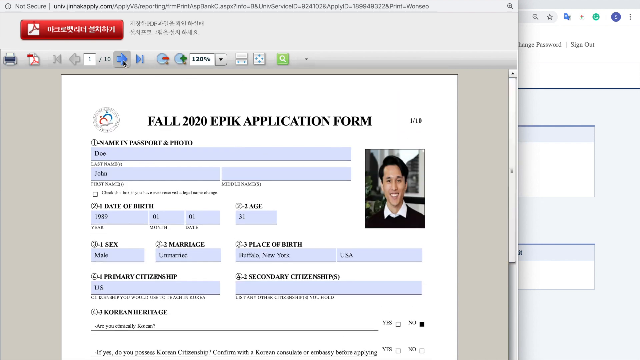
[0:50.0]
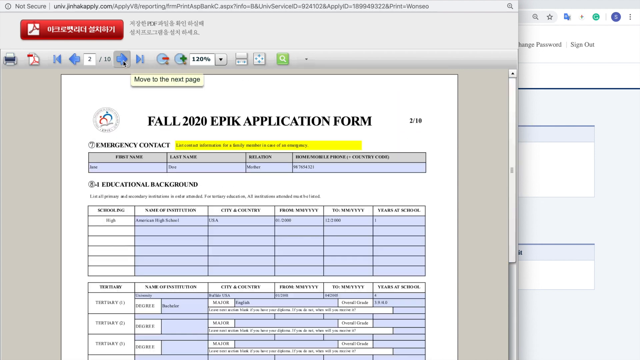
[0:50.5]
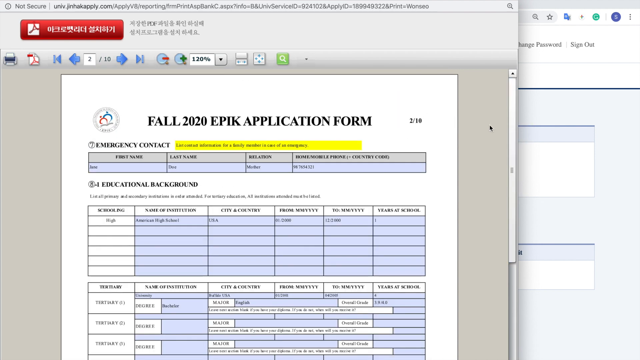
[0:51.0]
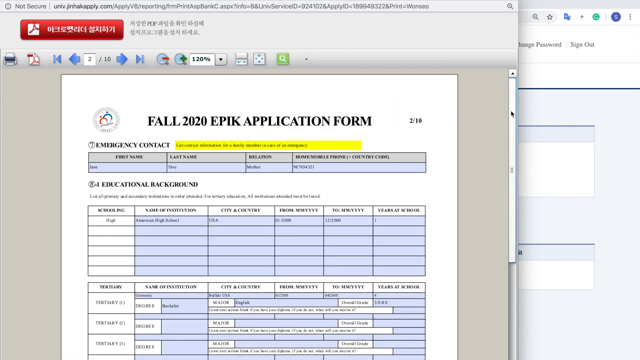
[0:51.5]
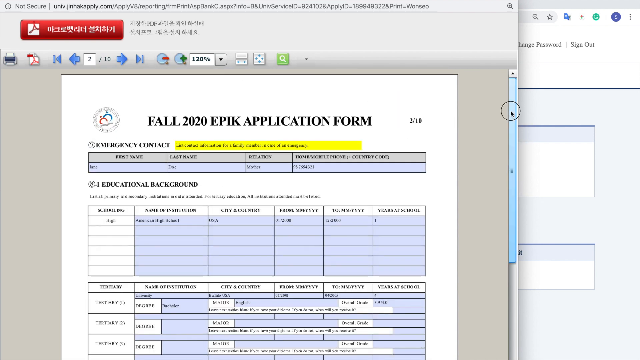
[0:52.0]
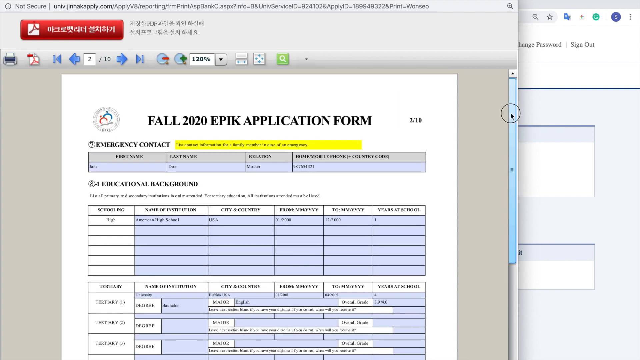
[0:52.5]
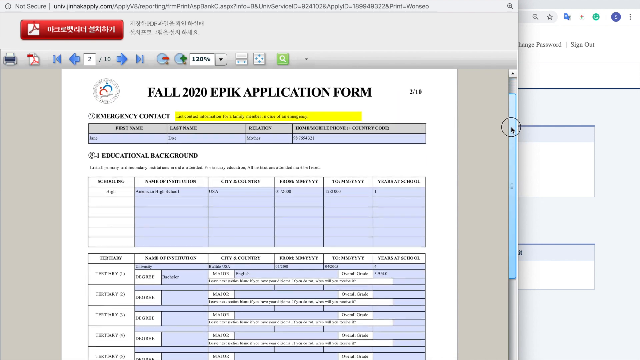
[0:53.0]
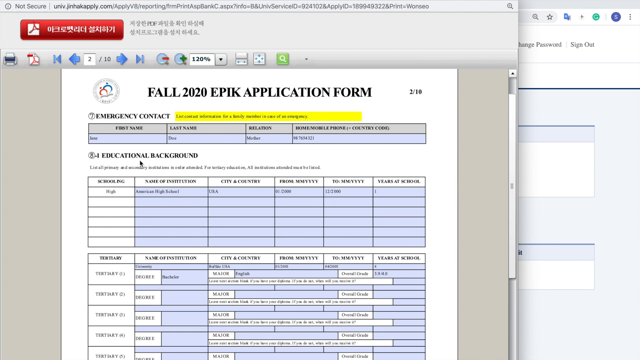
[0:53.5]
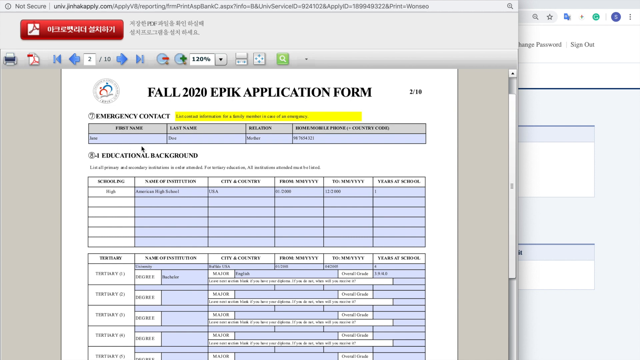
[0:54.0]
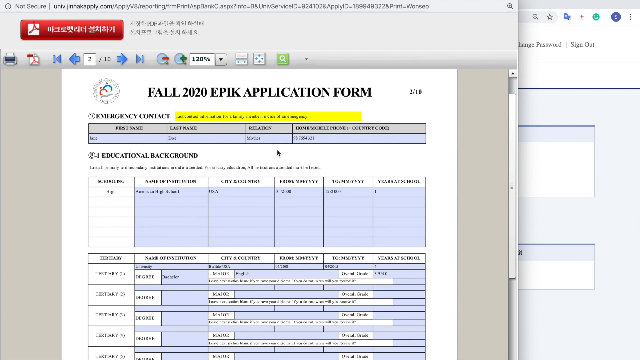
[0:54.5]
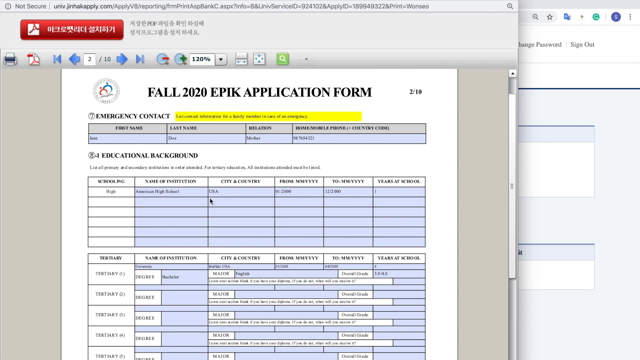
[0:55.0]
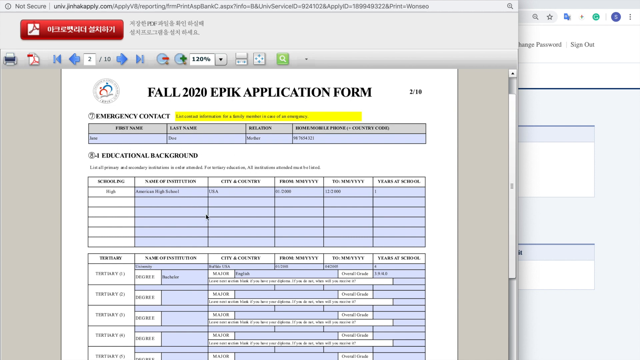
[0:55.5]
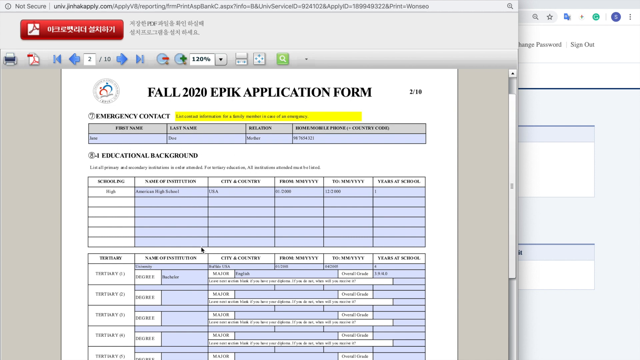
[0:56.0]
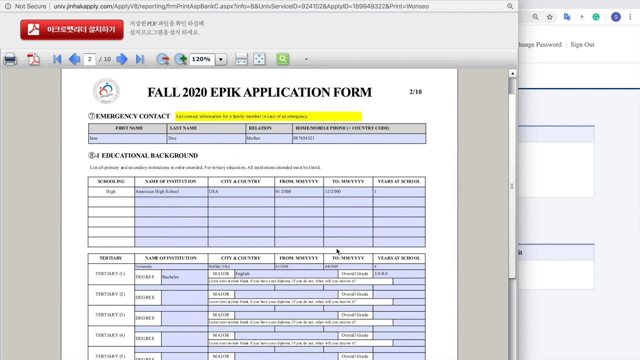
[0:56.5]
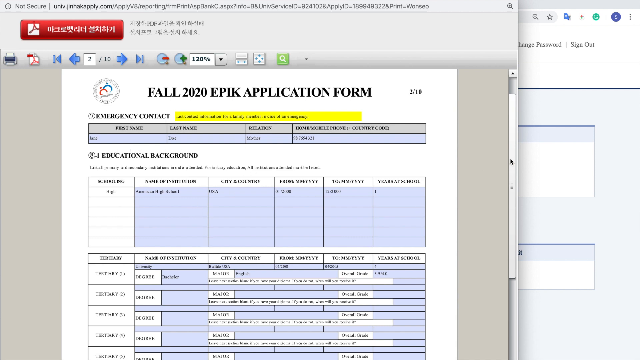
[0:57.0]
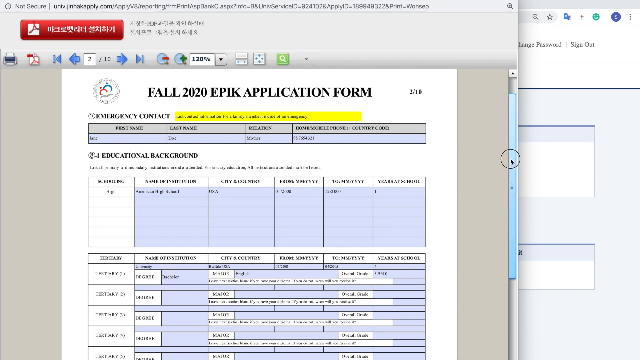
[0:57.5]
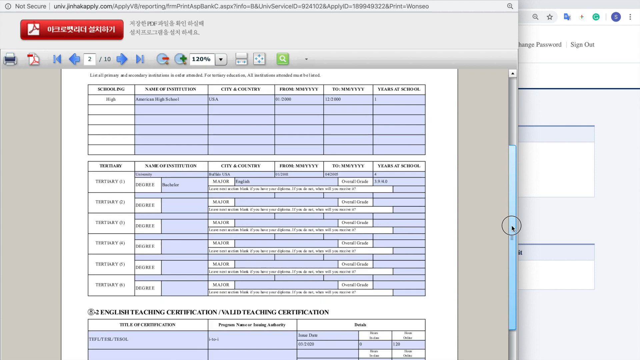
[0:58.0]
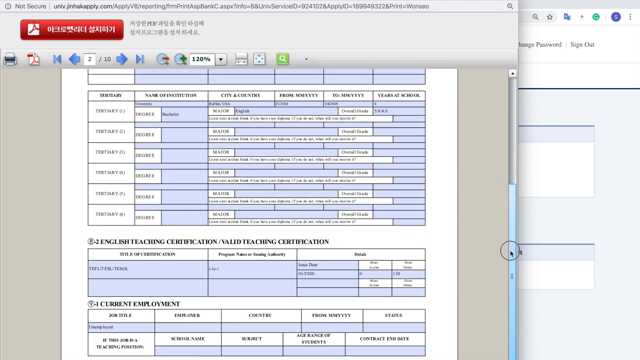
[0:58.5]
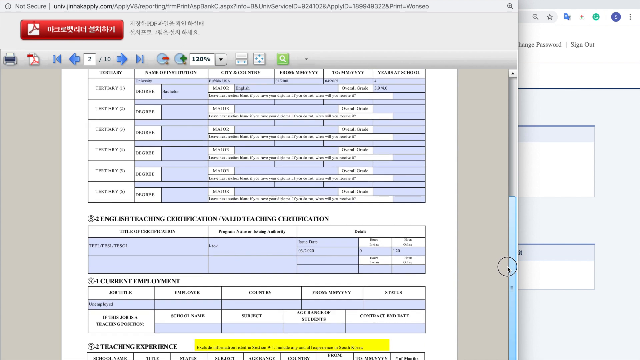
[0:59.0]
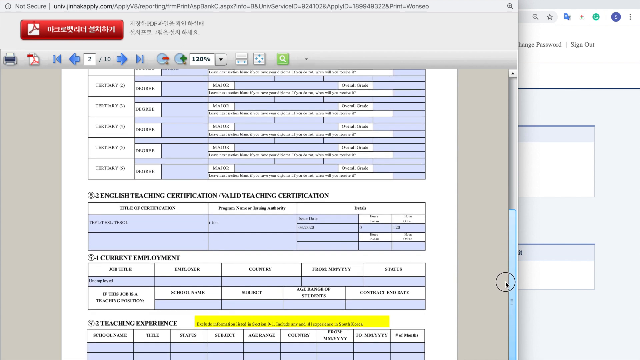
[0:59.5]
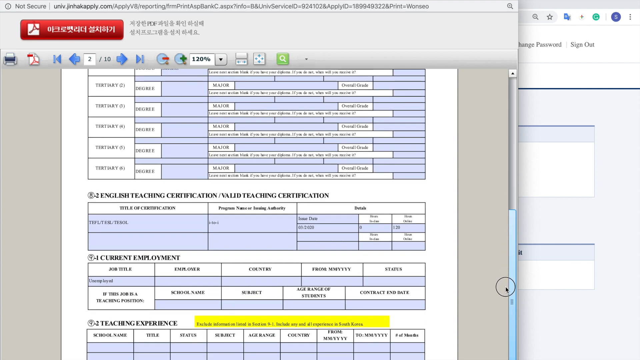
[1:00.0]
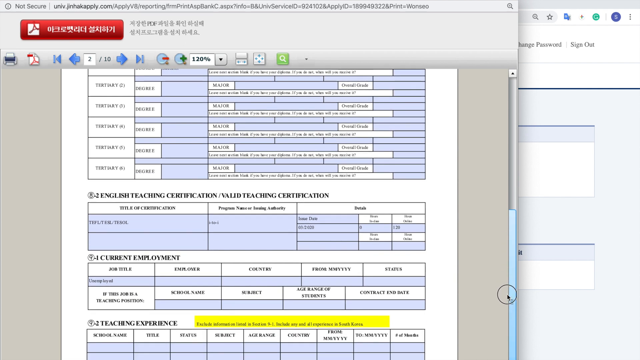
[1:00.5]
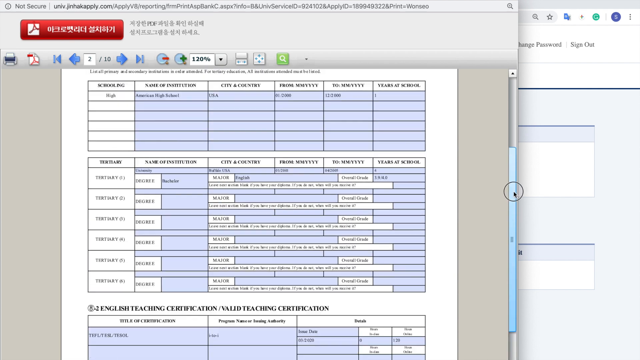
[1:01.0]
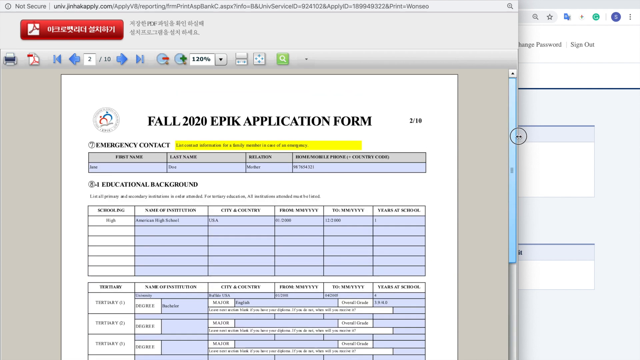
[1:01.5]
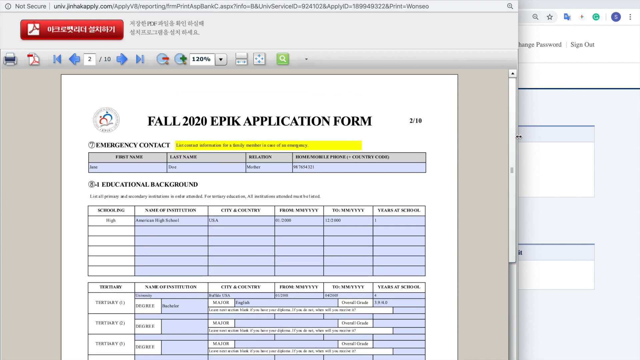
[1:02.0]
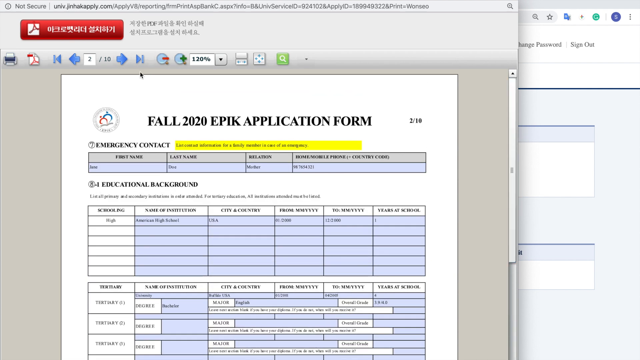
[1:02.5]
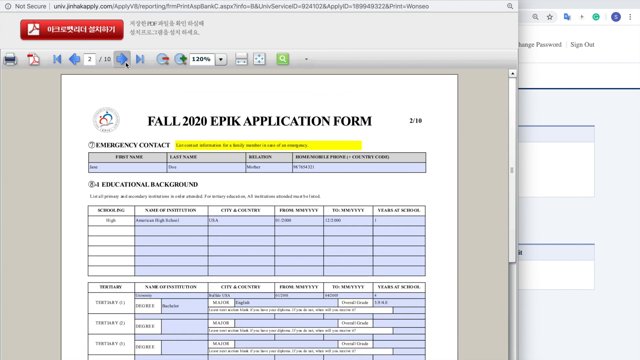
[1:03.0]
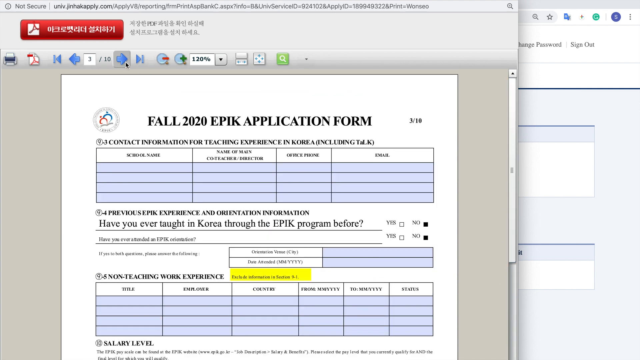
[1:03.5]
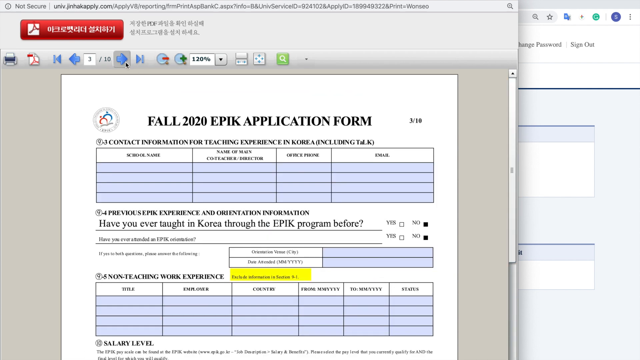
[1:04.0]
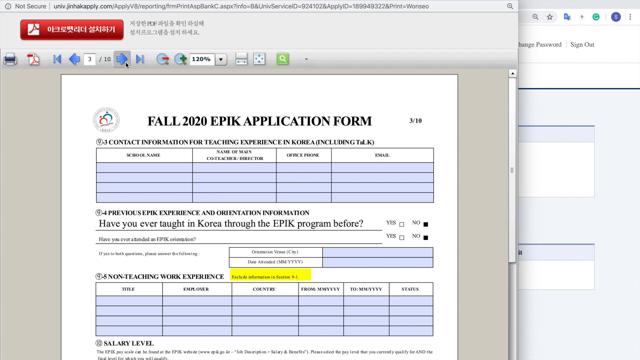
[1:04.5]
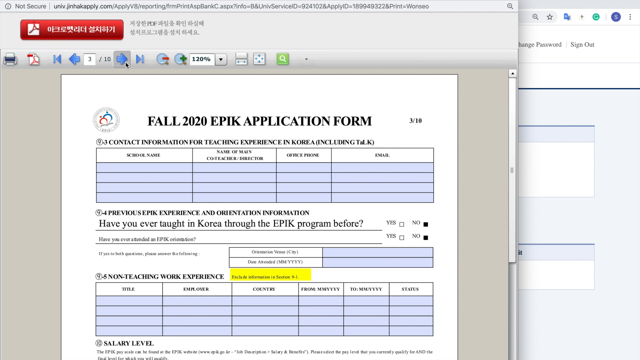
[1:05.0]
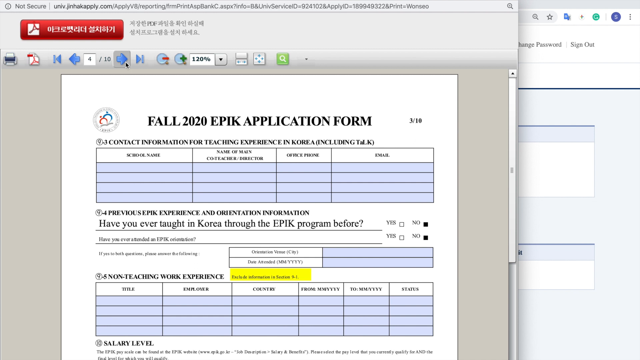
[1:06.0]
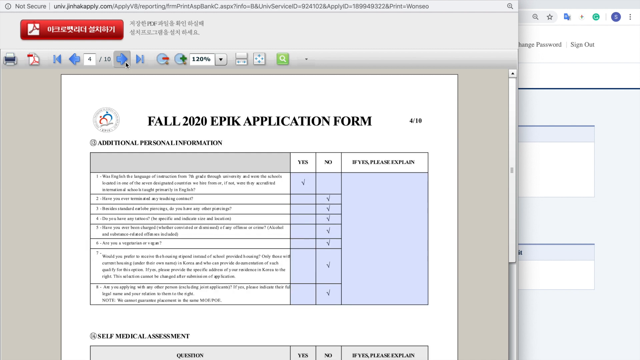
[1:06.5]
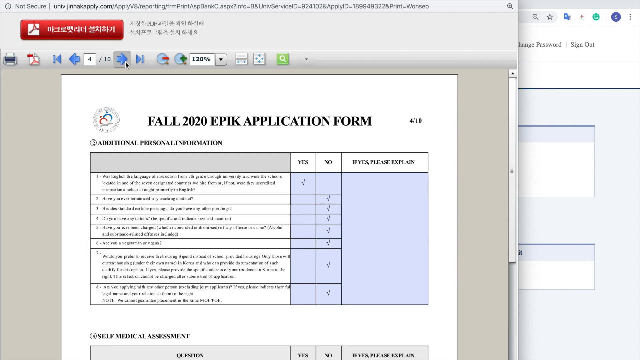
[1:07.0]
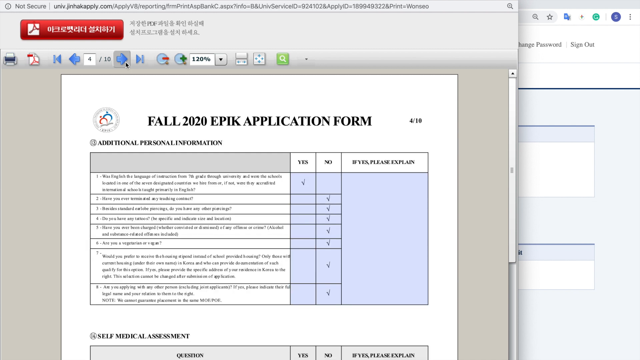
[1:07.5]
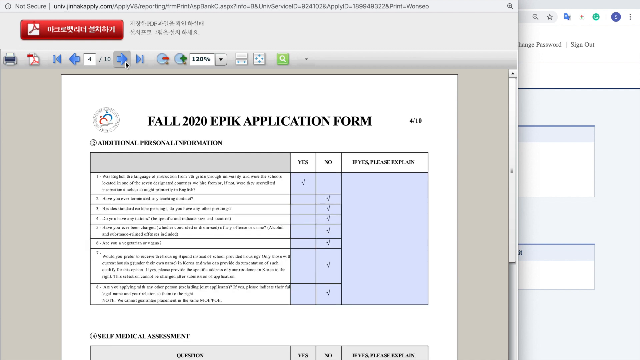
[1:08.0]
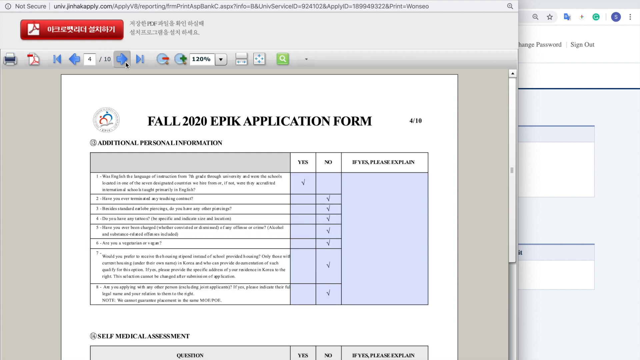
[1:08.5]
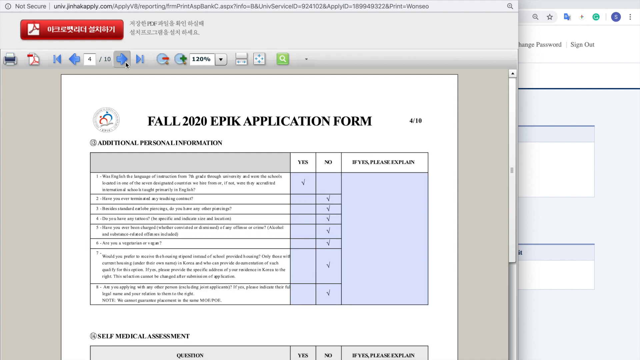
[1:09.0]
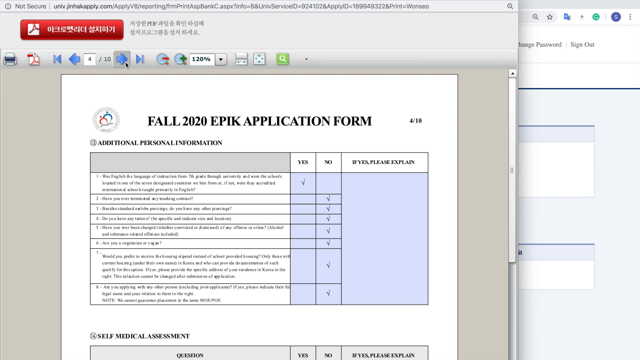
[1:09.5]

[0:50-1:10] On the EPIK Guest English Teacher Recruiting application form, one field is answered no. The person reviews all of the fields that were filled in on the name, passport and photo section: last name Doe, first name John, date of birth 1989, first month, first day, age 31, sex male, marriage unmarried, place of birth Buffalo, New York, USA, primary citizenship U.S., no secondary citizenship, and Korean heritage.